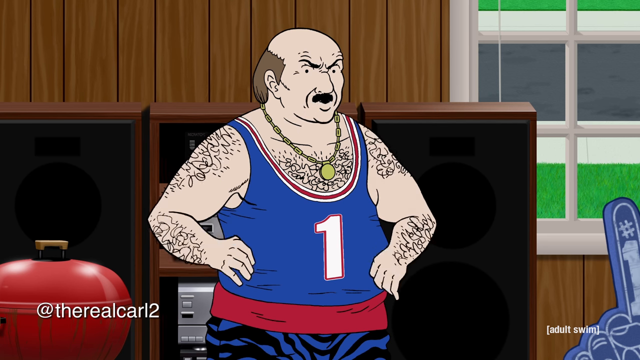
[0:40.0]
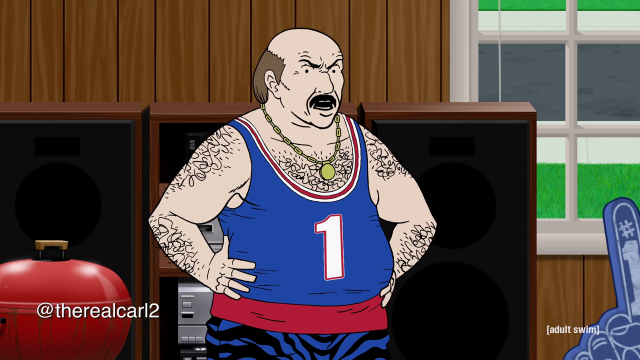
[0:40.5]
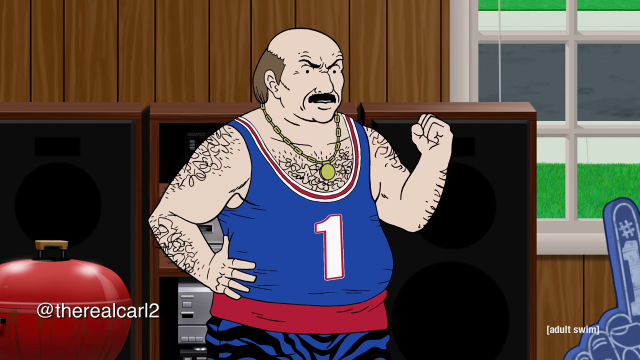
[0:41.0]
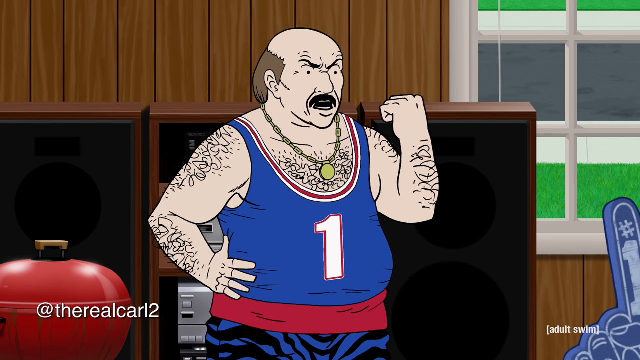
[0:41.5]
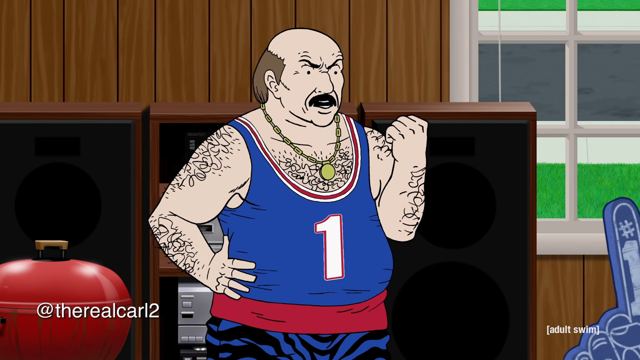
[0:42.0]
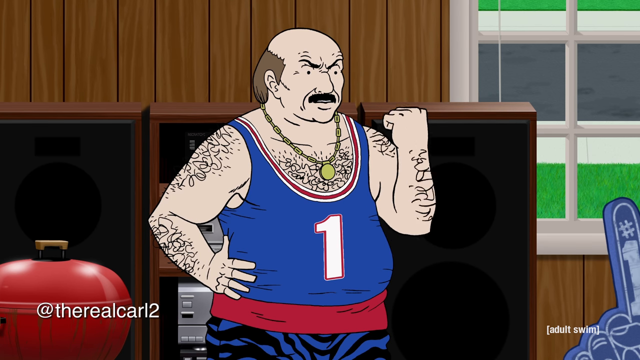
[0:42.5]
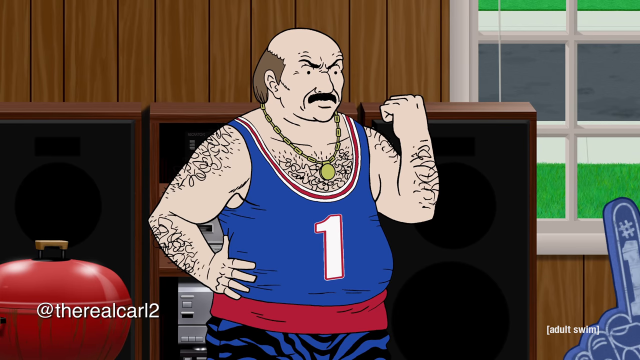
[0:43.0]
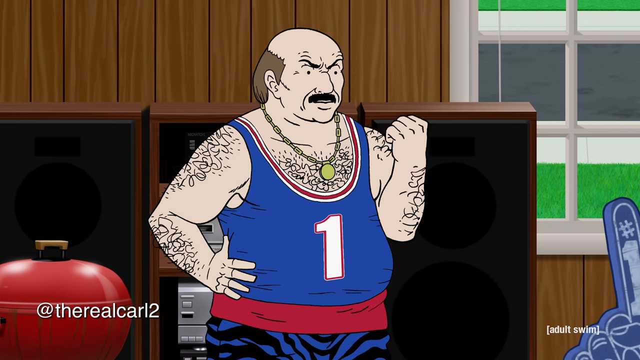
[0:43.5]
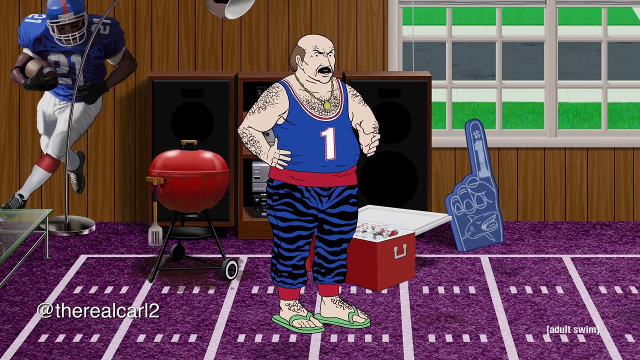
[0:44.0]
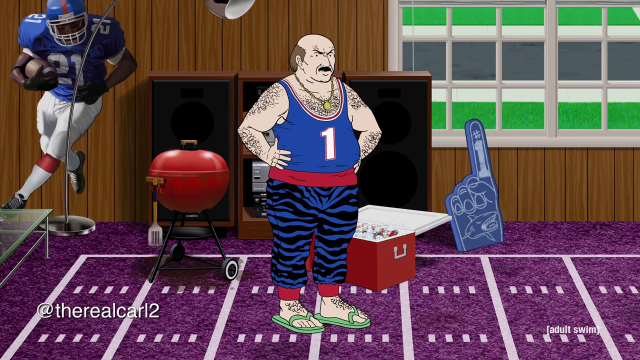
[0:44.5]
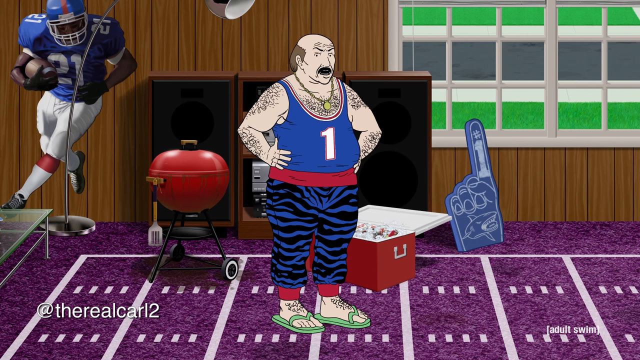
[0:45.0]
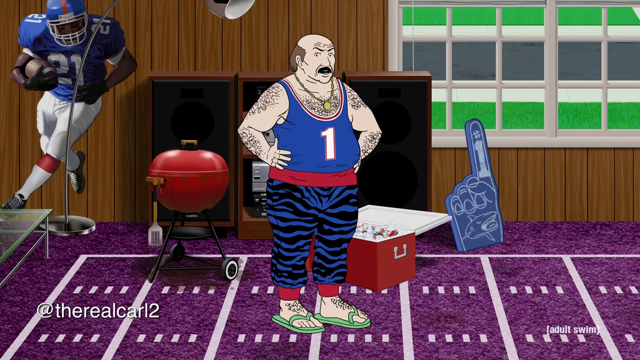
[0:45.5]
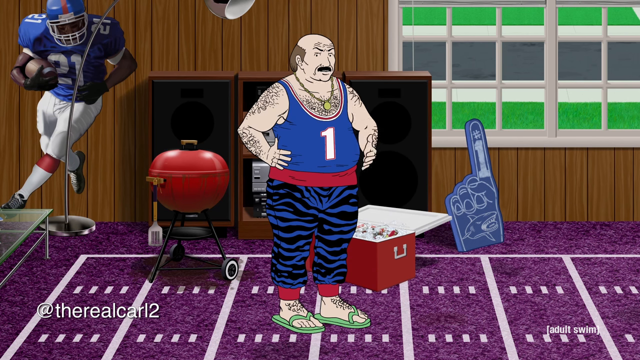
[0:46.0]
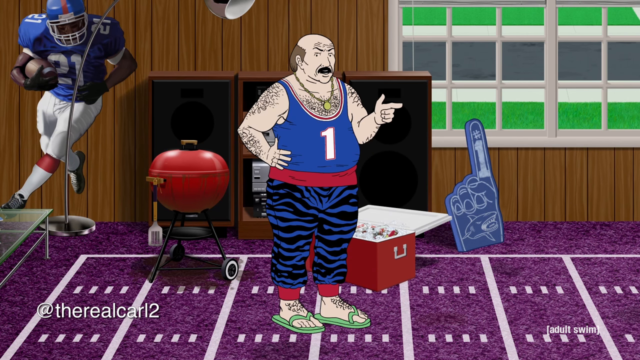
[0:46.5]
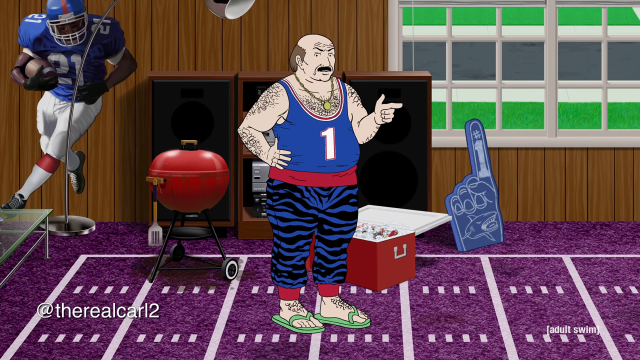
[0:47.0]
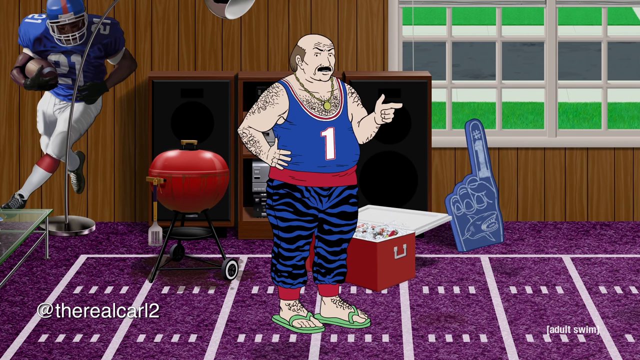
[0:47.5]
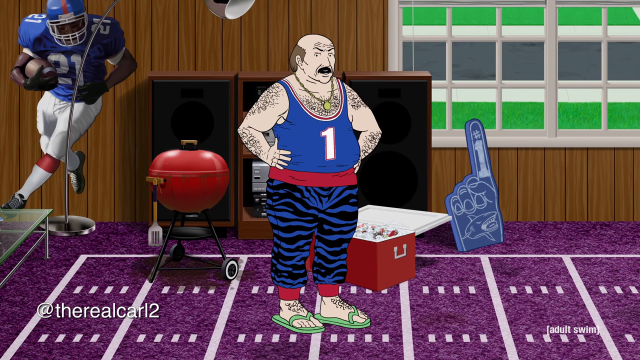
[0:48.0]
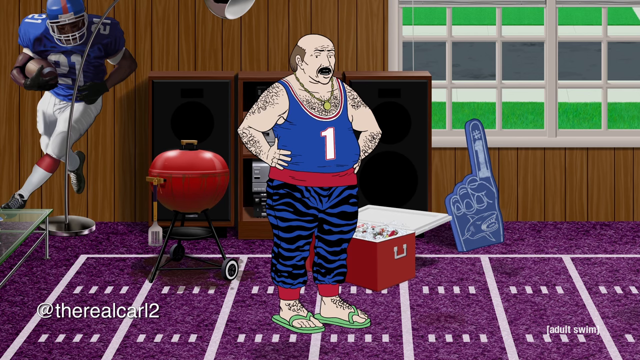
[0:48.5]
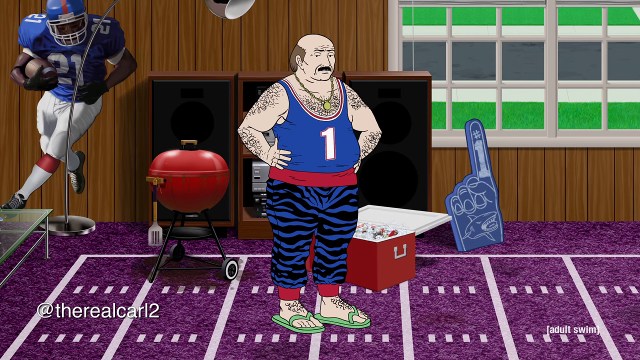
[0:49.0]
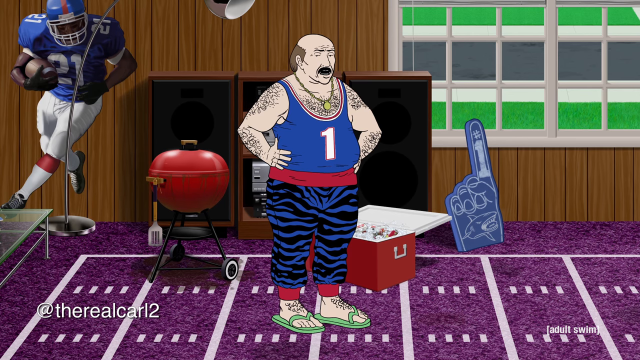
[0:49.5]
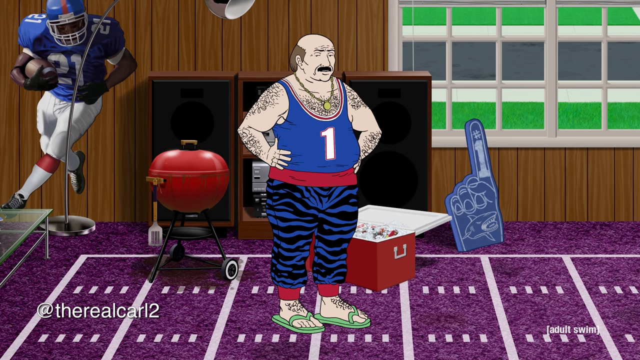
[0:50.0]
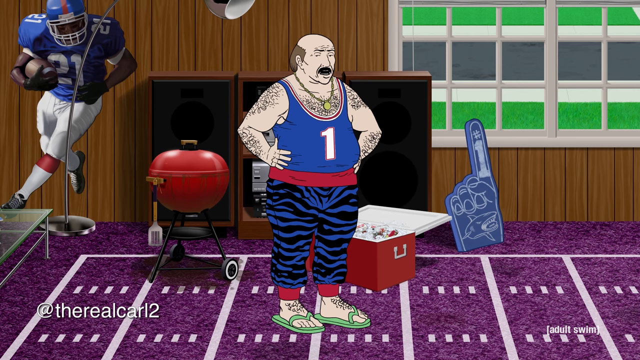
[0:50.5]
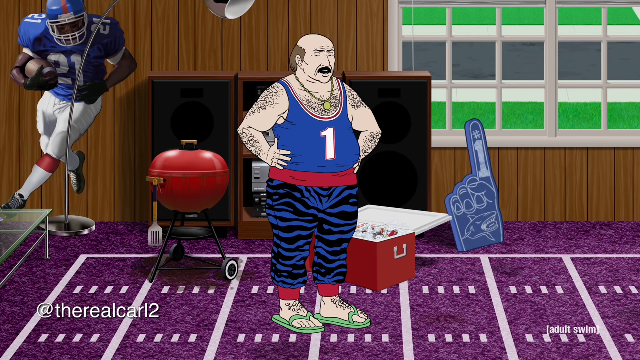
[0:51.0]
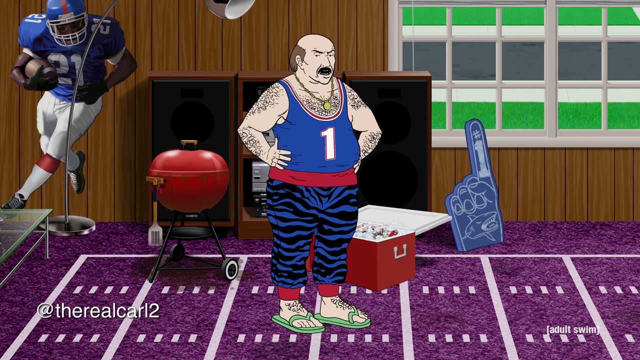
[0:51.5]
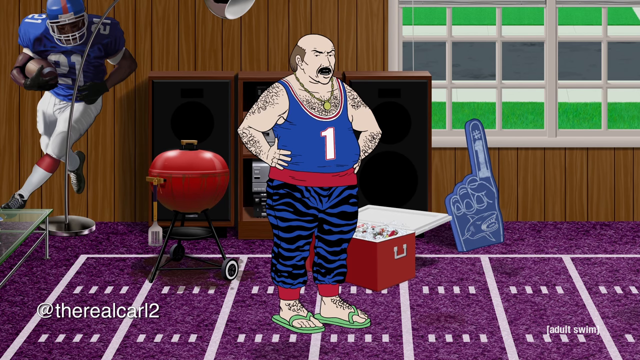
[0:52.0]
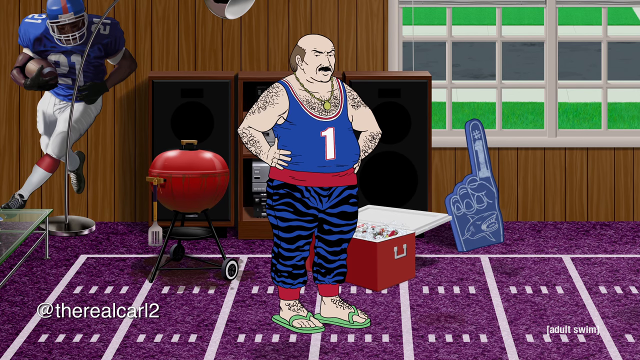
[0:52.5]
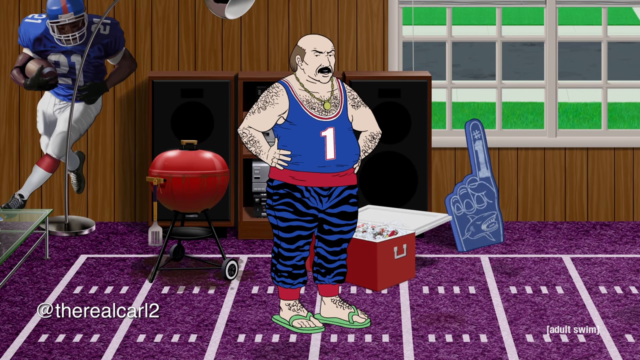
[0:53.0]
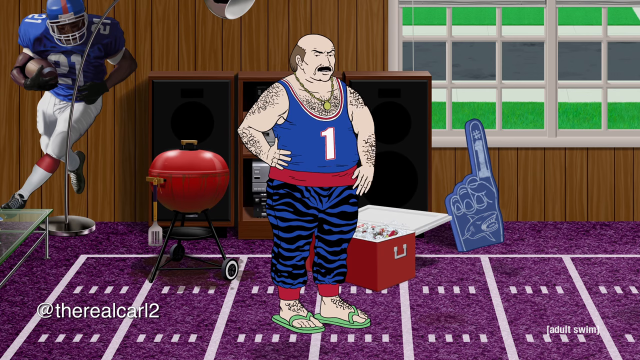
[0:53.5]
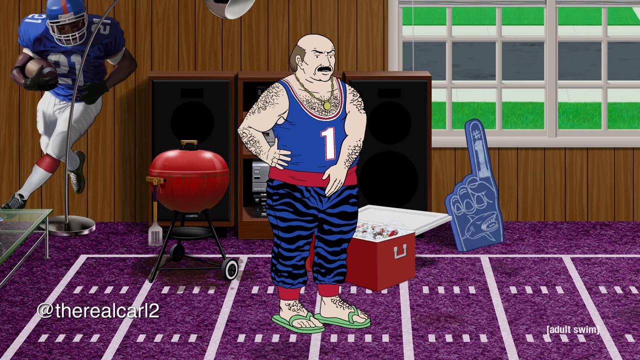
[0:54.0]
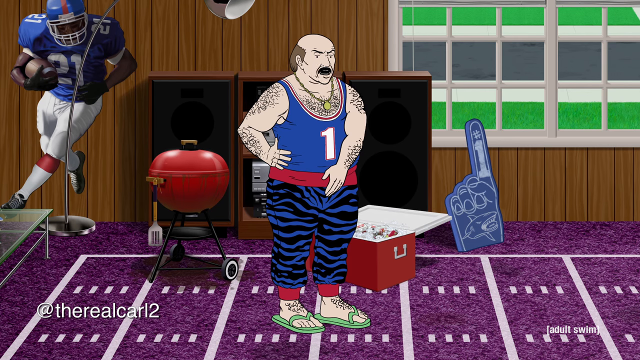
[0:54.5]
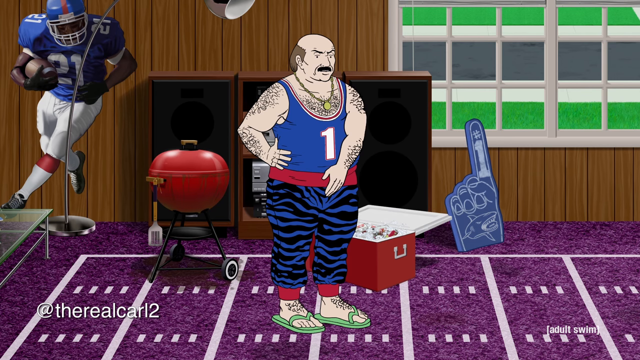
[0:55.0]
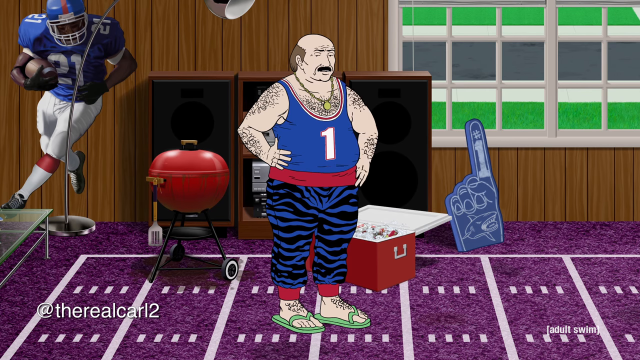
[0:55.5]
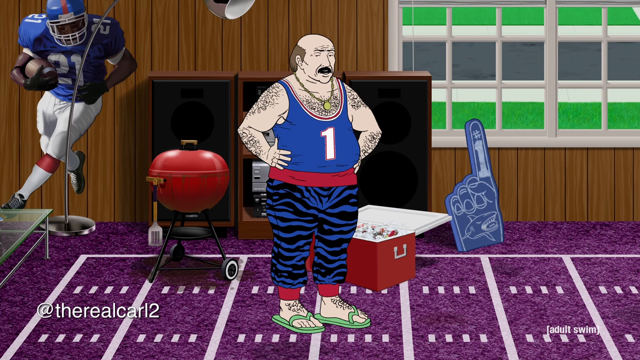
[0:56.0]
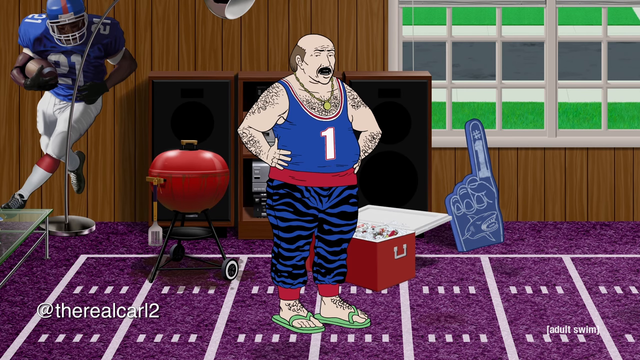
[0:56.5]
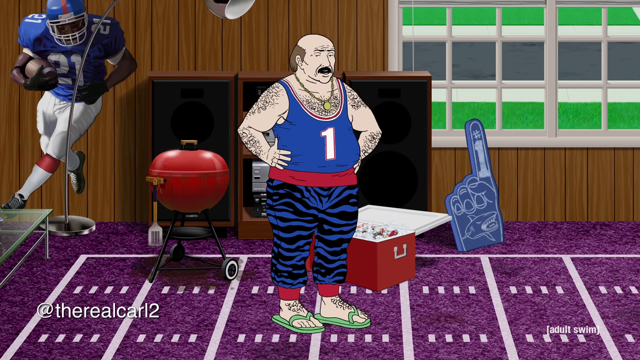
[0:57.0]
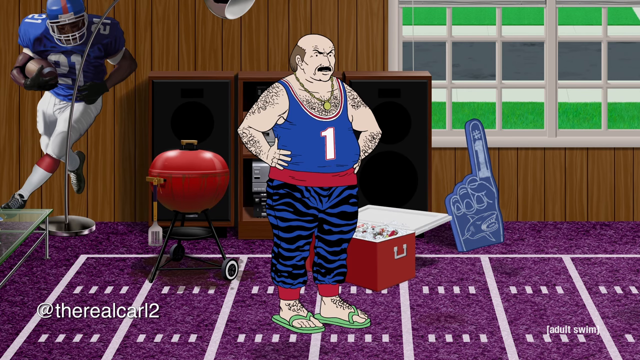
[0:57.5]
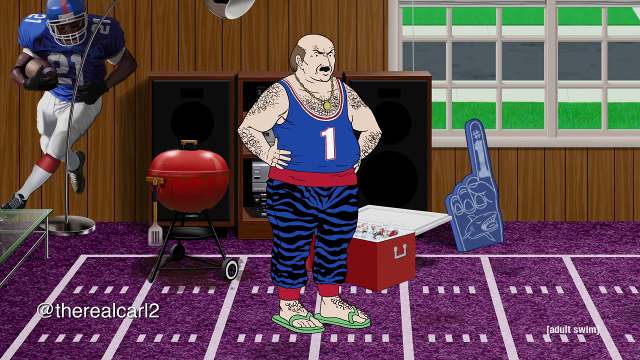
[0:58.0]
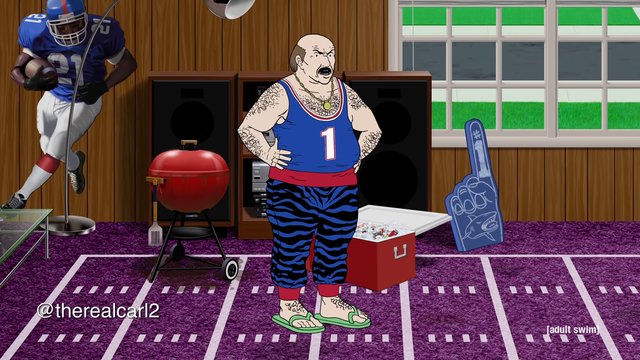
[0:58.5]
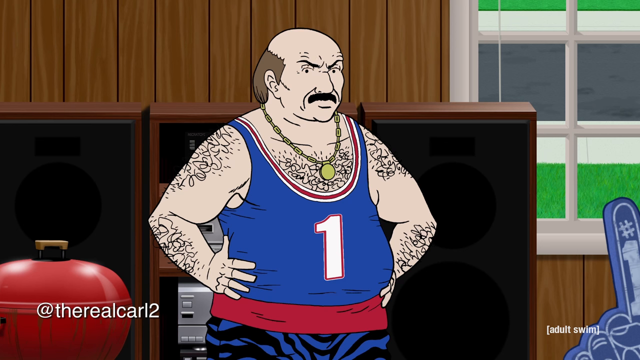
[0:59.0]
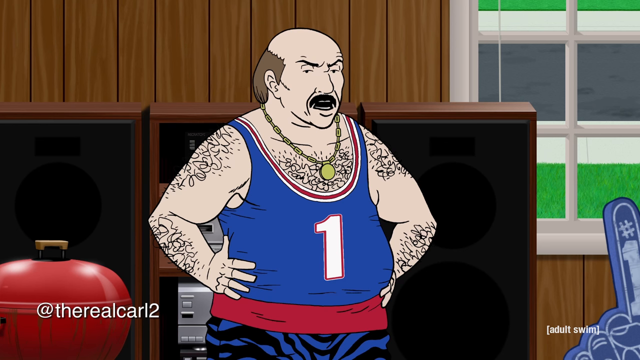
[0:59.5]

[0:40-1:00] A huge man with a bald head wears a necklace with a yellow round thing on it. His hands, arms and chest are hairy, and he wears a blue and red top. Behind him are three wooden cabinets, and on the center section there is a radio right next to him. There is an open cooler box, and on the left side there is a braai stand. He talks to someone behind the camera and moves his left hand as he talks. He wears green sandals. Through the window from where he is standing, the outside with the lawn can be seen. Next to him is a man in an American football uniform holding a ball; he looks like he is running, but his feet are not on the ground. He also wears a helmet on his head.